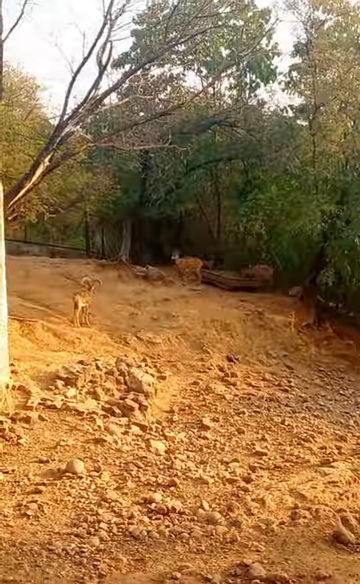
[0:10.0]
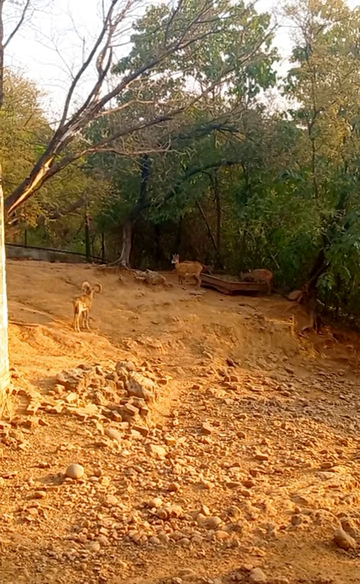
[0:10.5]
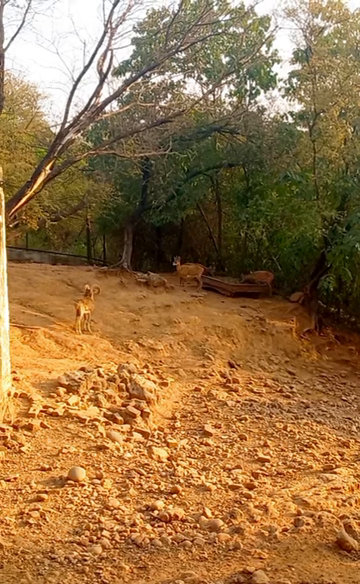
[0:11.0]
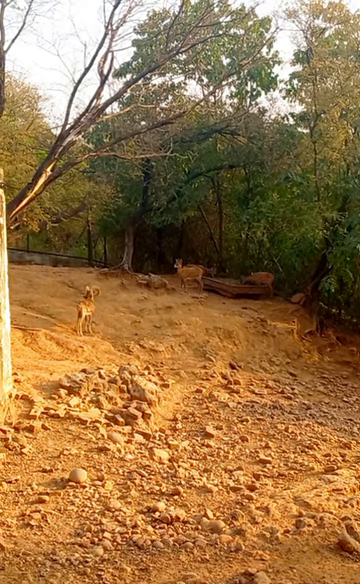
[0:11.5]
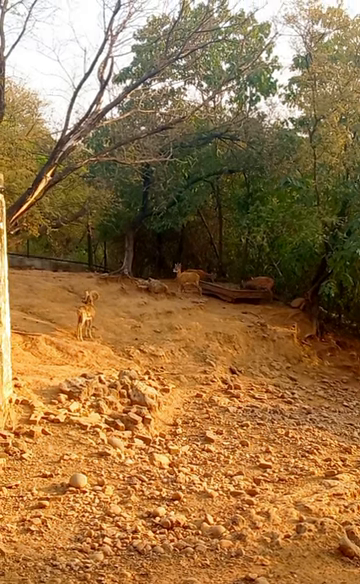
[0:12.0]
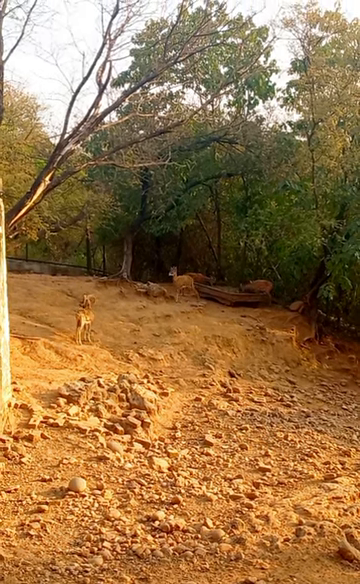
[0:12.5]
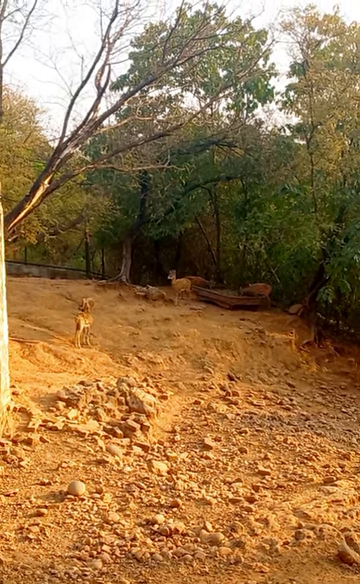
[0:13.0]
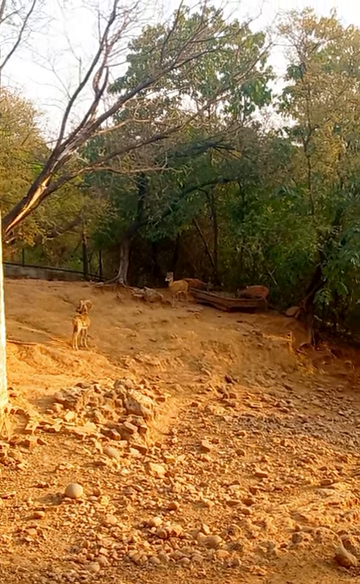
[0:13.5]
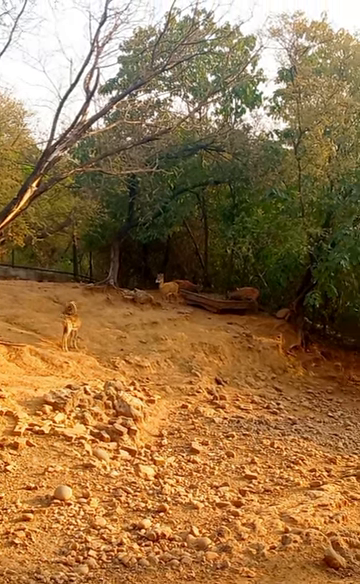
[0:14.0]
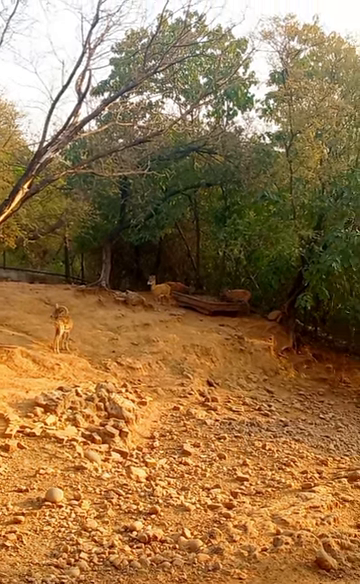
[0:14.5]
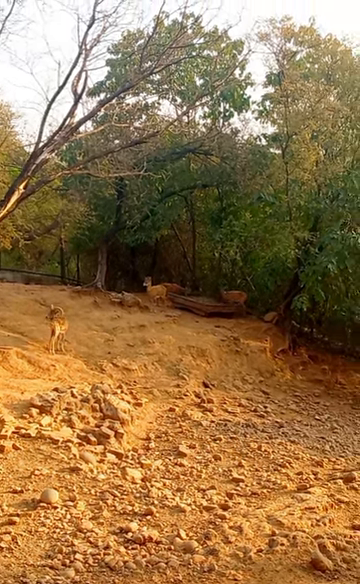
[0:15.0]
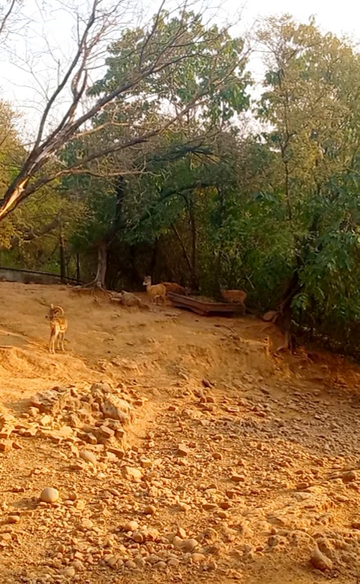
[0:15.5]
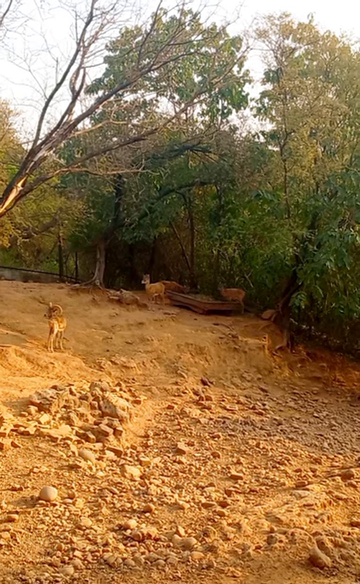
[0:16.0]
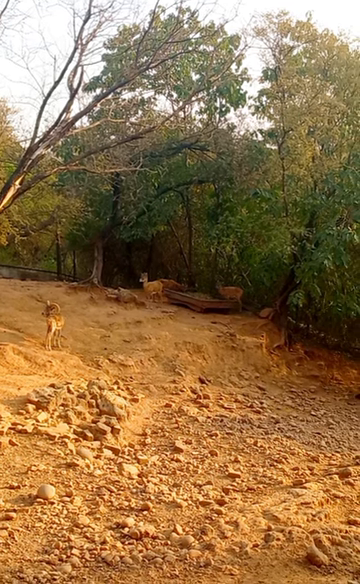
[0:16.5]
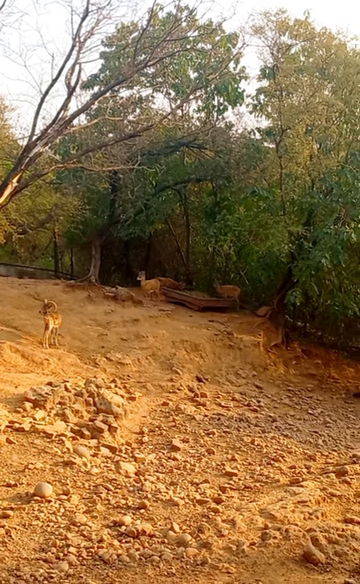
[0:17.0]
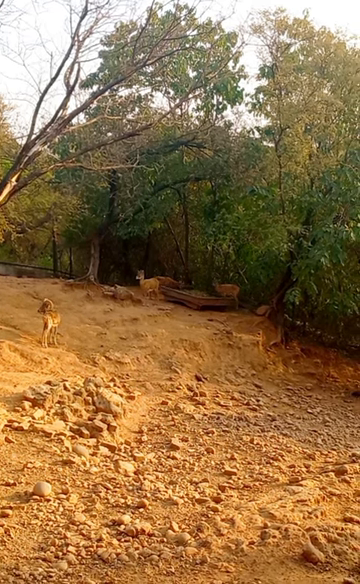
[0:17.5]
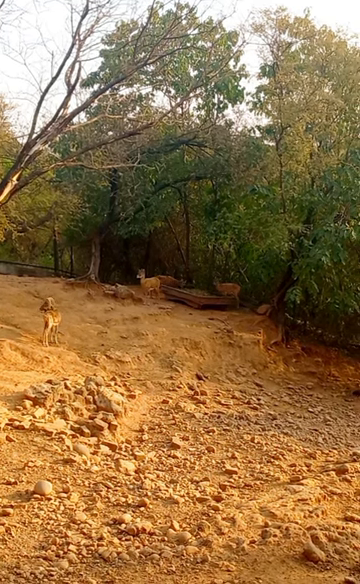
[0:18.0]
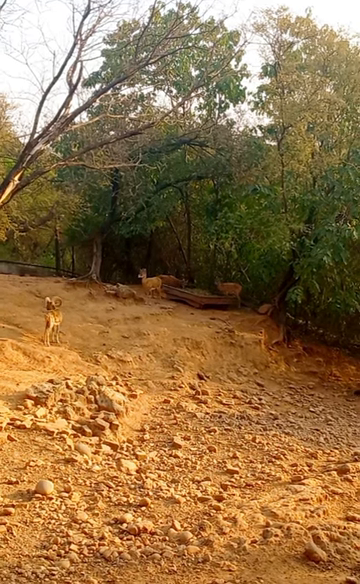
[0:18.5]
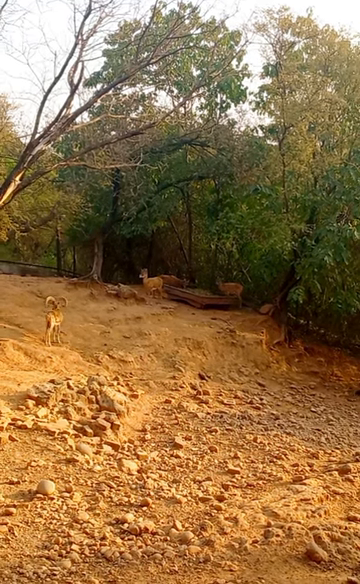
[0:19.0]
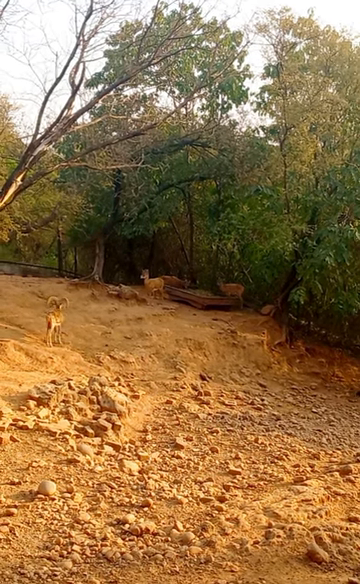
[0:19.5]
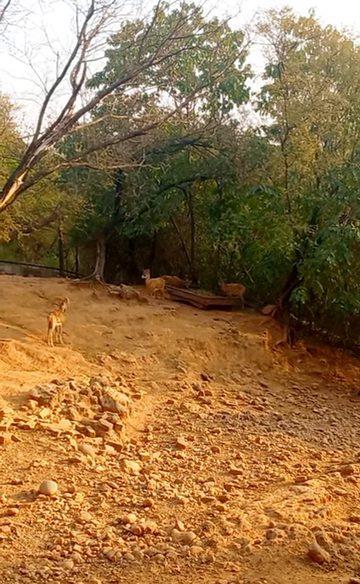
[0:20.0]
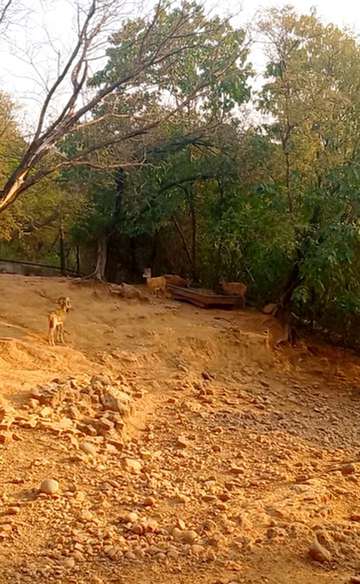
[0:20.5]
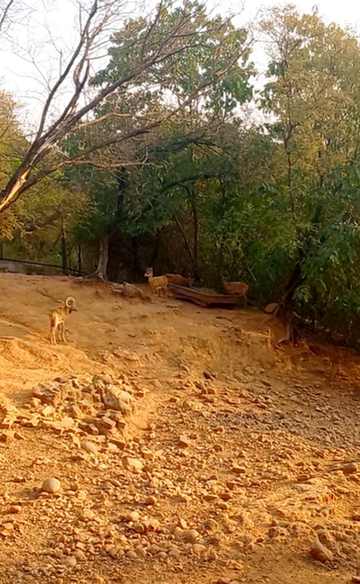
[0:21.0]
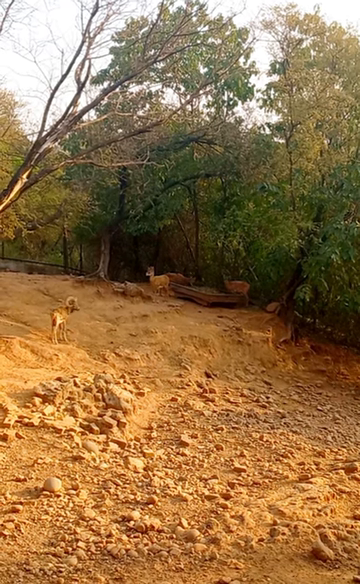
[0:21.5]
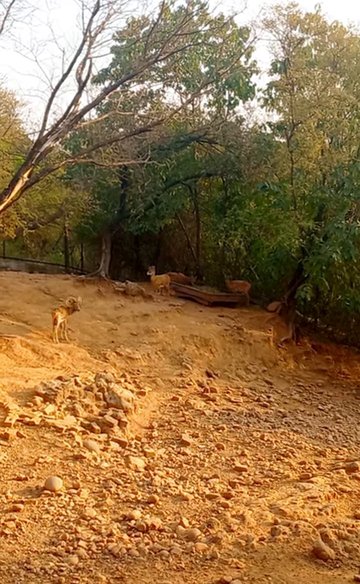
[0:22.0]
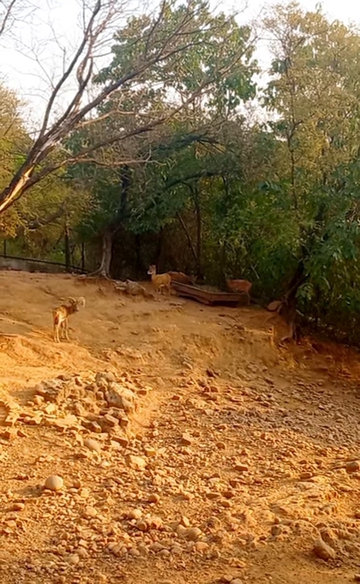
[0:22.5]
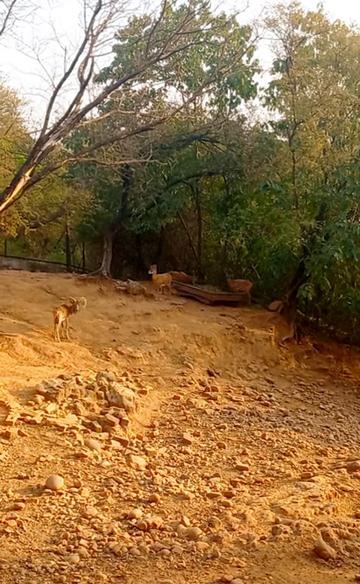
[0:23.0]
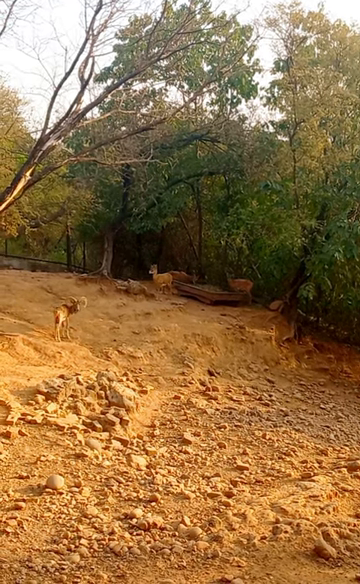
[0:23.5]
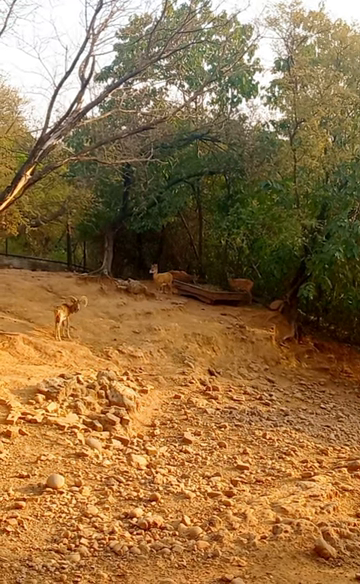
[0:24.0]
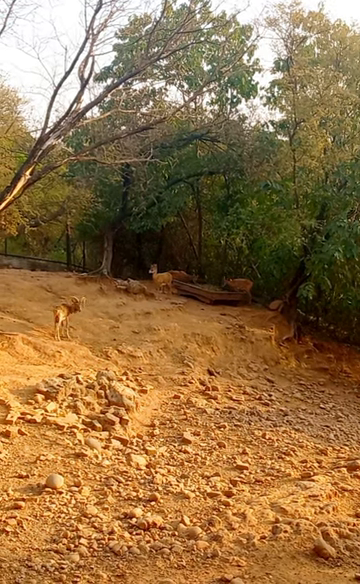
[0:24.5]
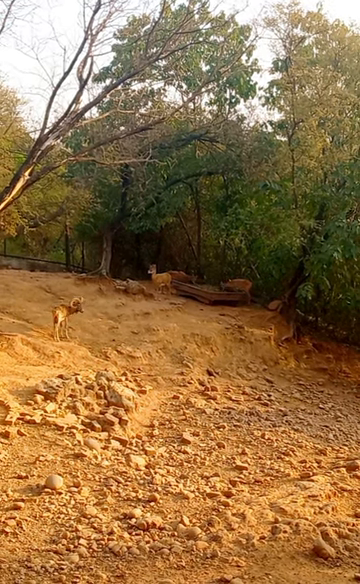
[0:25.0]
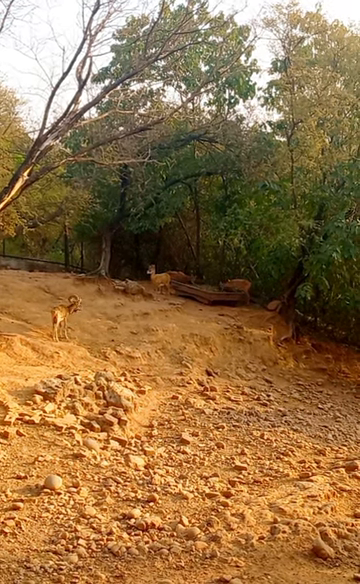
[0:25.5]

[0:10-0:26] Inside a zoo enclosure that is primarily dirt and rock and very steeply sloped, with the slope running from left to right, one smaller horned creature resembling either a goat or a deer is in the mid-ground, and a larger version of the same animal, which does not appear to have the large horns, is in the background. The two deer-like animals suddenly look to the left as if they both see something, as the camera pans slightly to the right to reveal a third deer-like creature at the back of the scene, which has raised its head from what appears to be some sort of feeding tray. Big trees with green leaves grow in the area. Outside the rocky outcrop, almost immediately at the fence line, there are massive, very lush, well-kept trees with green leaves, suggesting the dirt area is not due to an arid landscape but is likely the habitat these animals prefer. At the end of the shot, the smallest creature, the one with the big horns, turns its head fully to look directly at the camera.